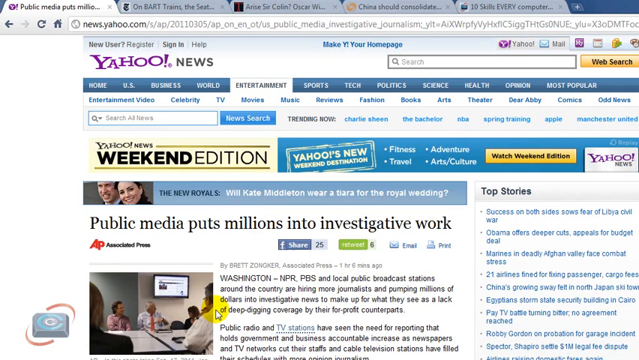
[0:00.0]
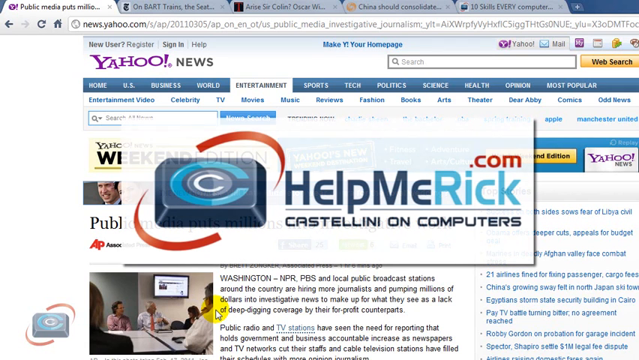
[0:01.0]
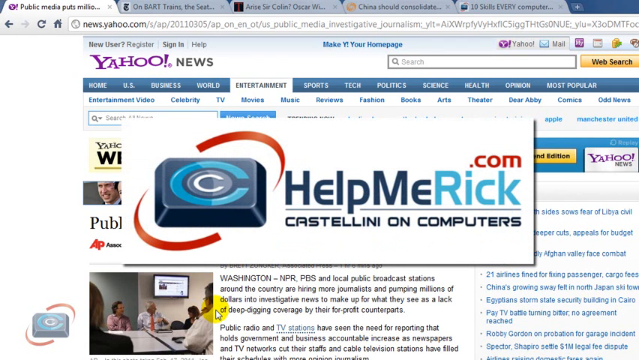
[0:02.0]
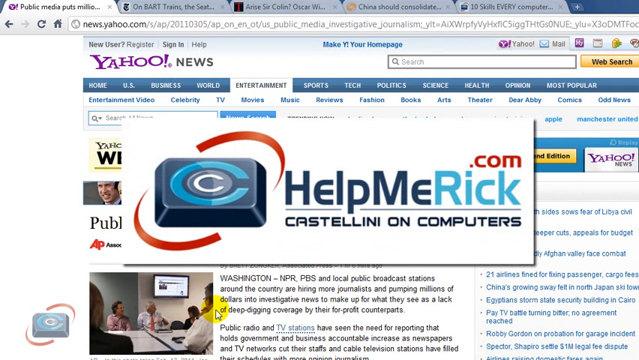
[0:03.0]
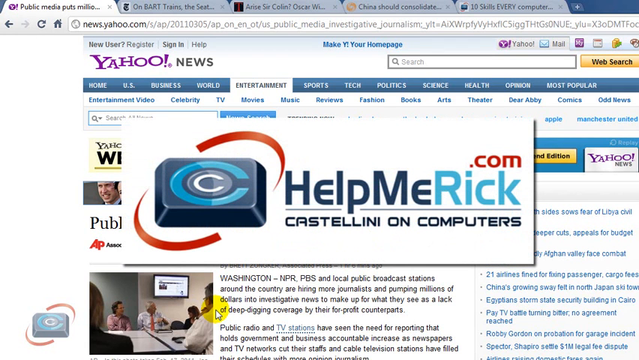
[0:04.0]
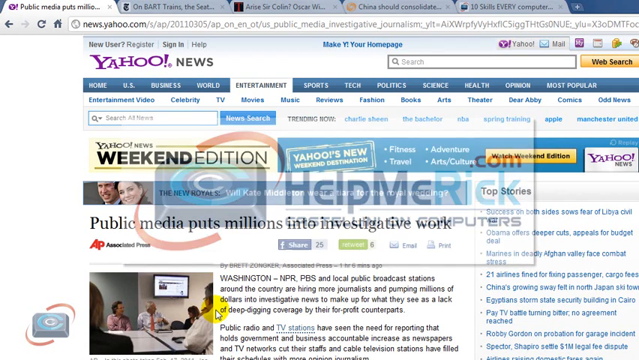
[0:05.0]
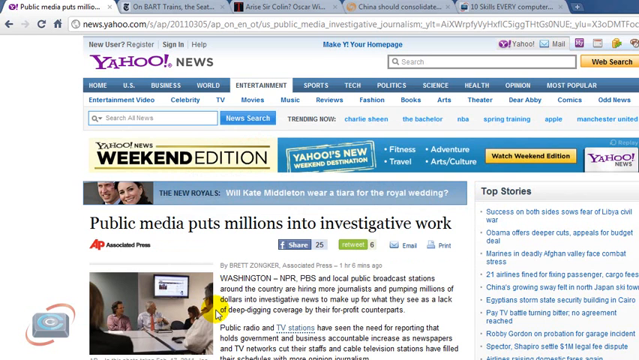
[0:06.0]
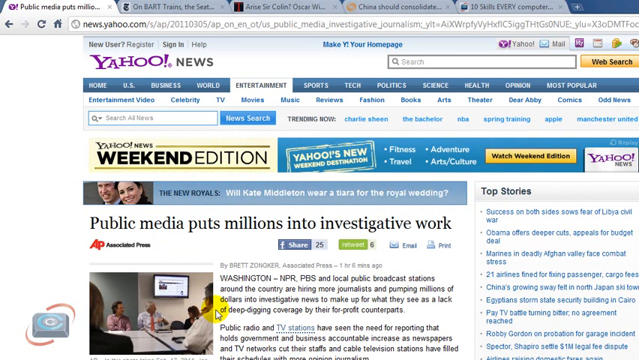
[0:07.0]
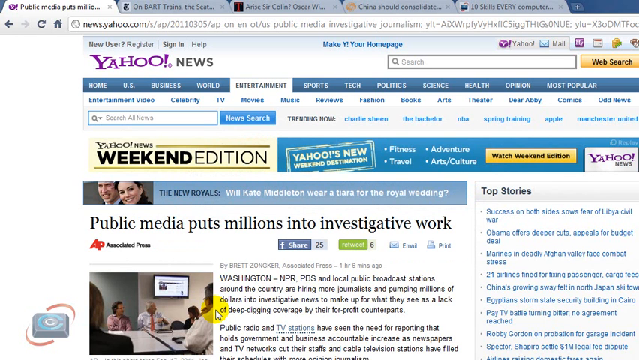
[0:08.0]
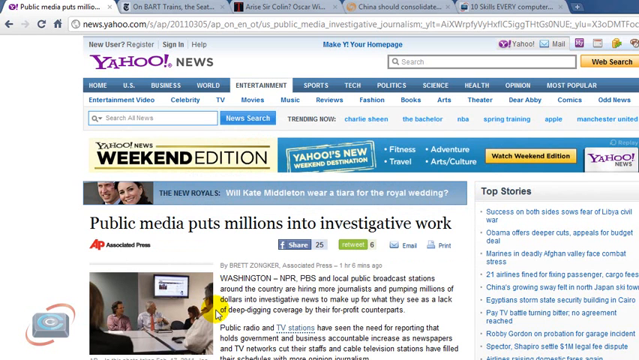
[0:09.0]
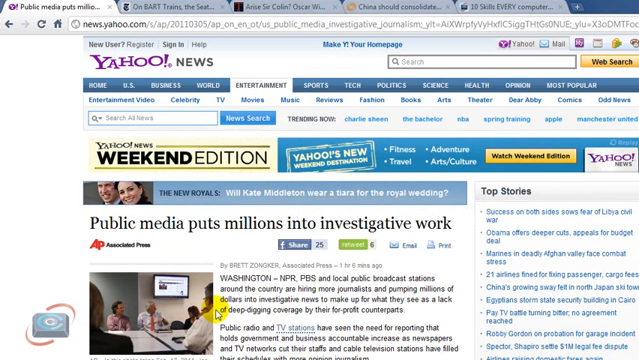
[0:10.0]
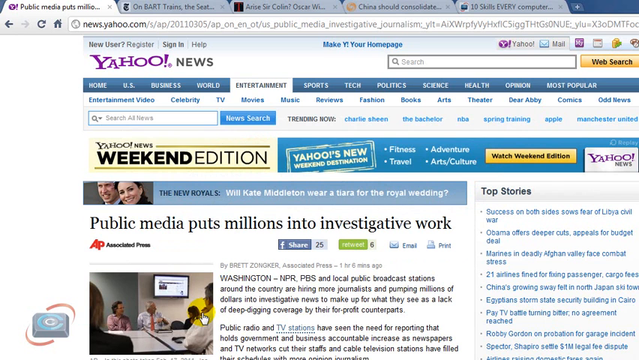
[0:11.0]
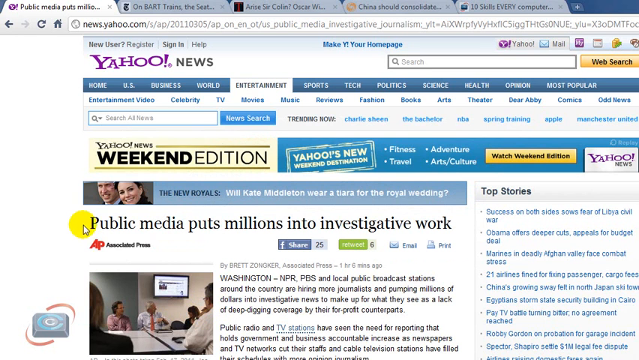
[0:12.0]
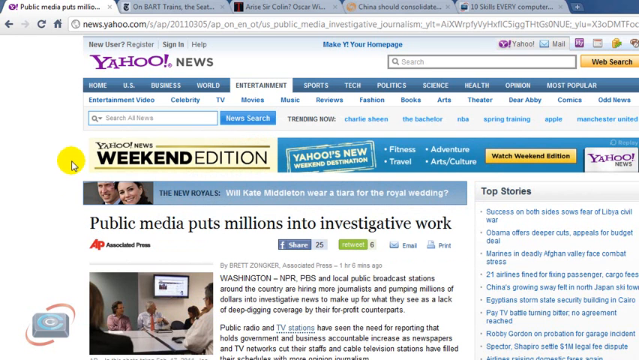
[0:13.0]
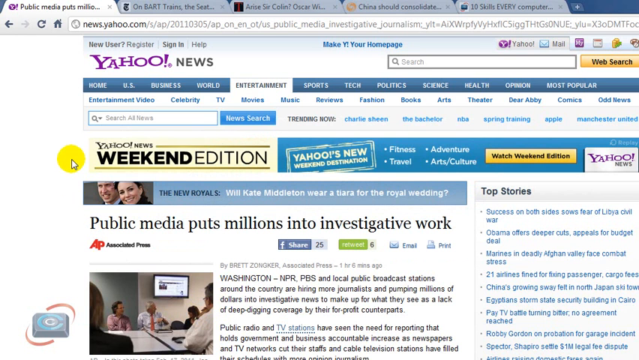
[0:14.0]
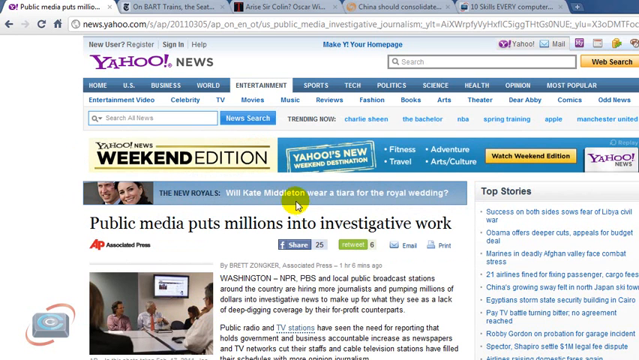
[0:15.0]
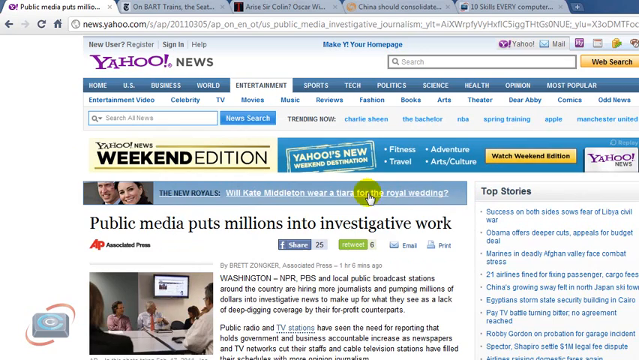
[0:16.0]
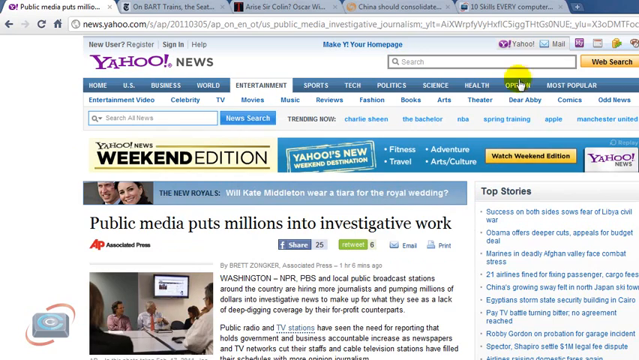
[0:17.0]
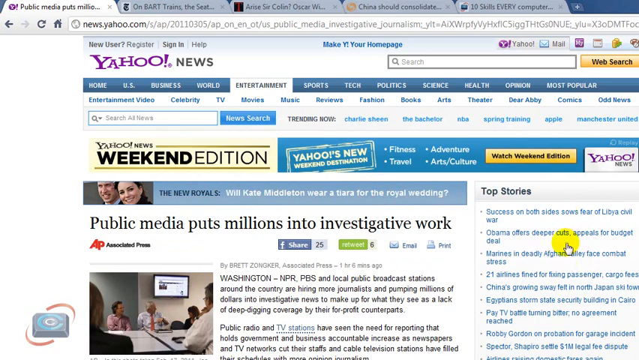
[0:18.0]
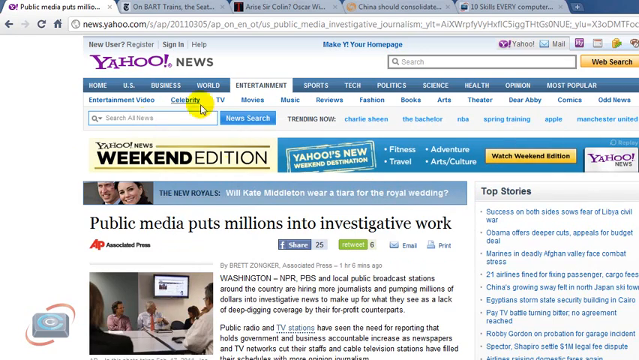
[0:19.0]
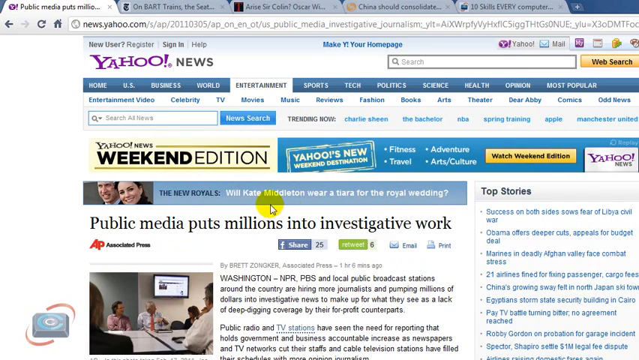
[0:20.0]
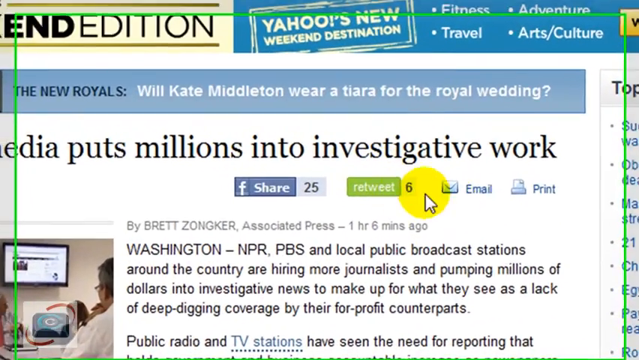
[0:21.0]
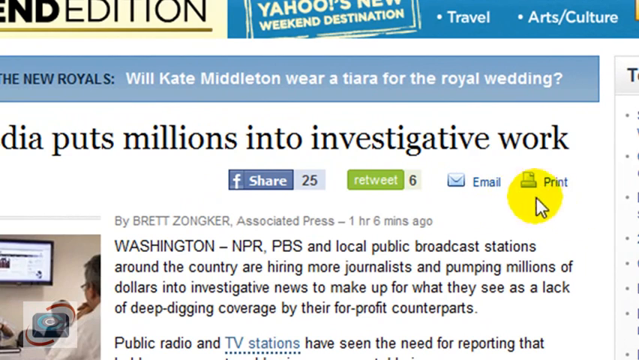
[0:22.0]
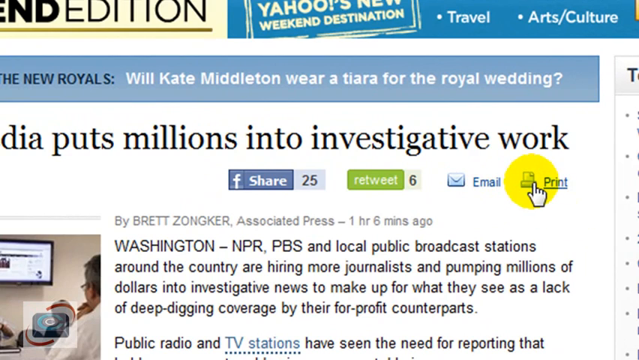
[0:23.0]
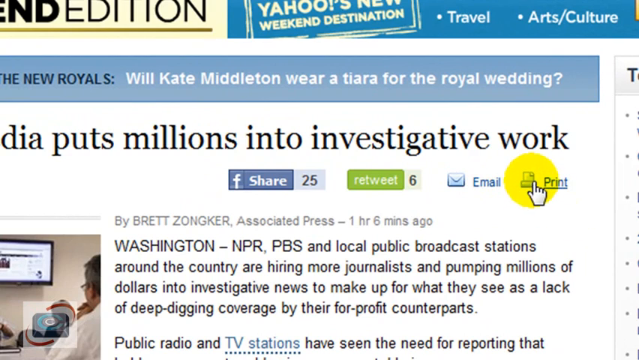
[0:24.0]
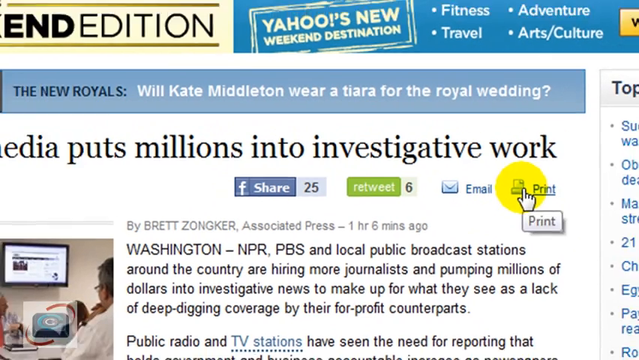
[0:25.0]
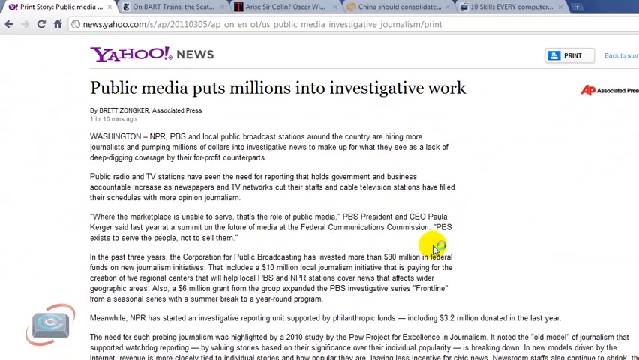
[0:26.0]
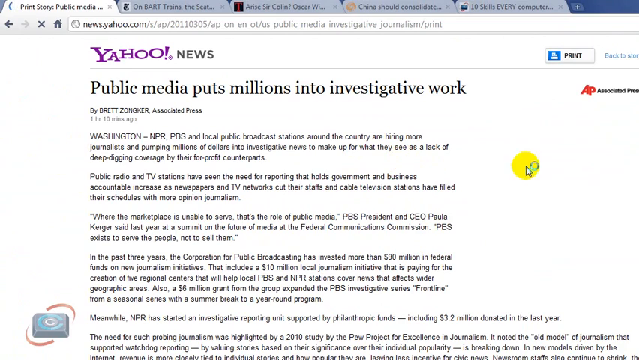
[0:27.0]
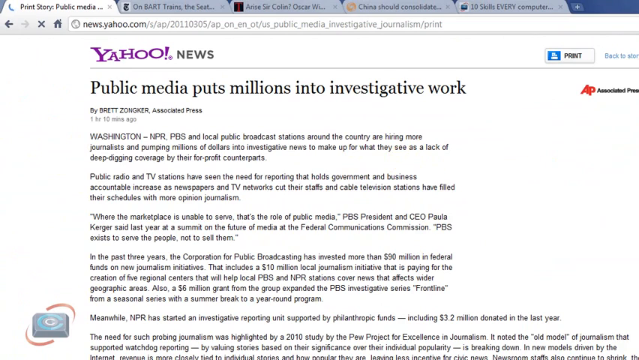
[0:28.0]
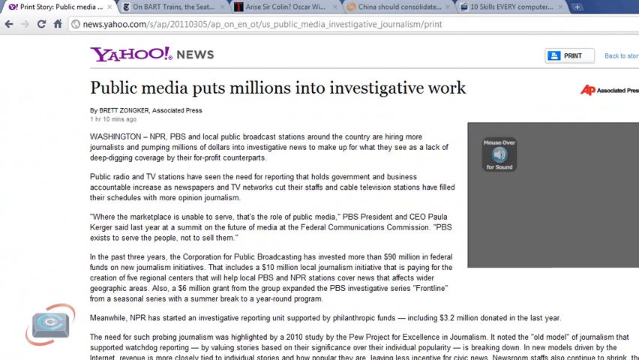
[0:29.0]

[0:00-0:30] A webpage reading "Yahoo News" opens on its weekend edition. The page is very colorful and highlights some hot topics. A pop-up reading "helpmerick.com" appears, then disappears, revealing a small article on the opening page titled "Public Media Puts Millions Into Investigative Work". A cursor with a yellow circle around it moves randomly and very quickly across the screen. It clicks on the article, then clicks retweet and then print. When print is hit, red circles appear. The cursor then clicks on something else that brings up a black-and-white video of a car driving. The front of the page appears with sections such as sports, tech, politics and science that can be clicked on.